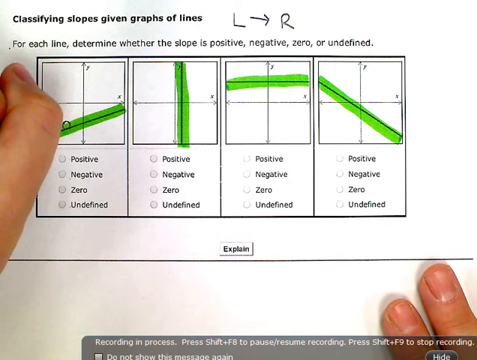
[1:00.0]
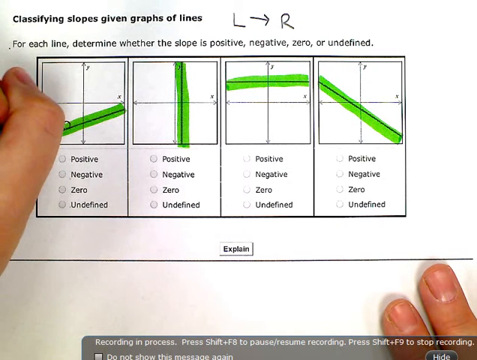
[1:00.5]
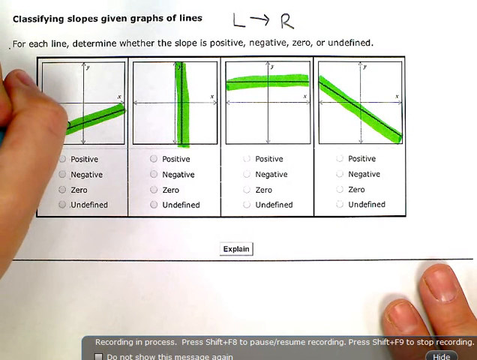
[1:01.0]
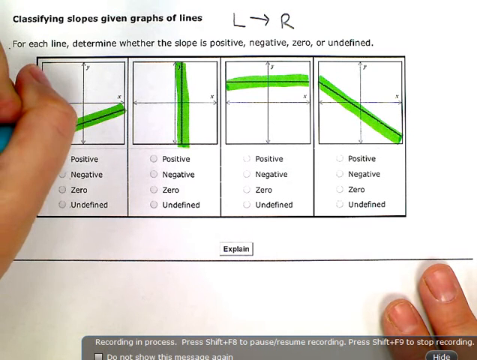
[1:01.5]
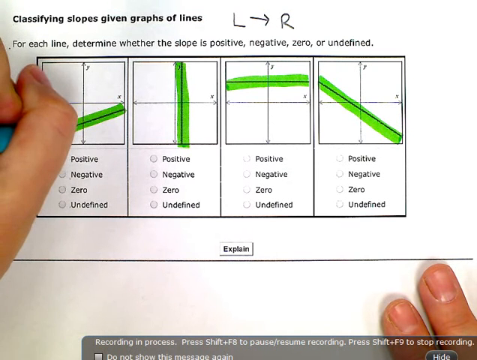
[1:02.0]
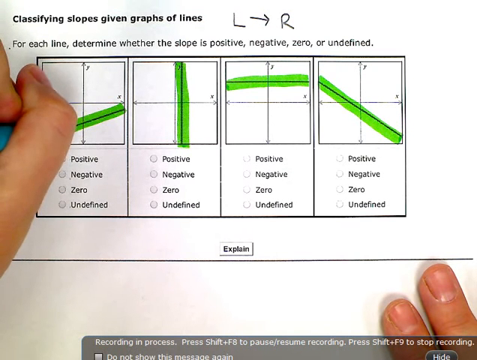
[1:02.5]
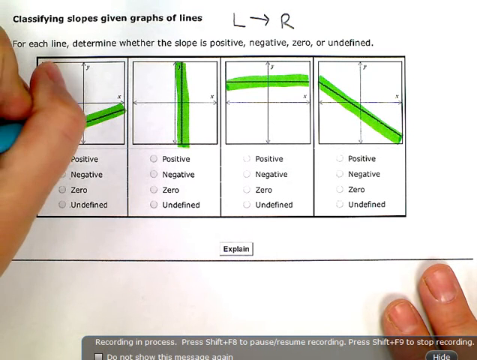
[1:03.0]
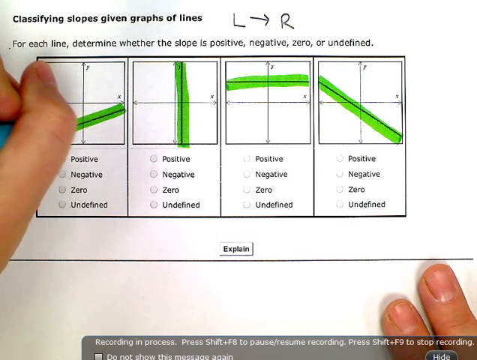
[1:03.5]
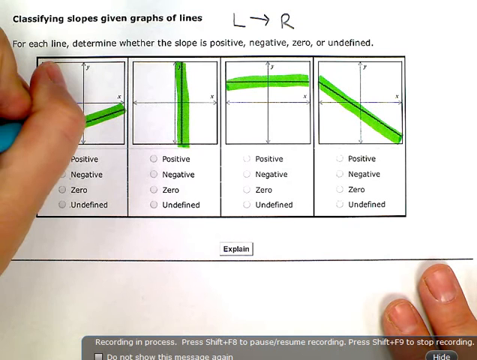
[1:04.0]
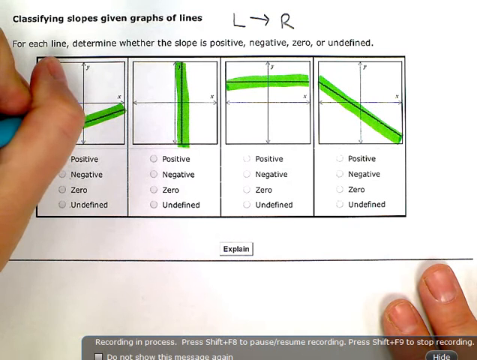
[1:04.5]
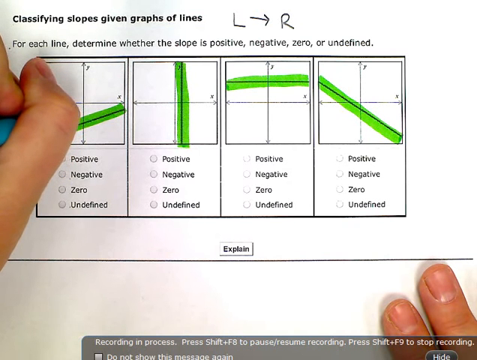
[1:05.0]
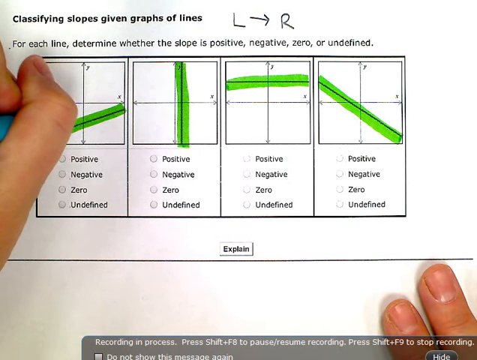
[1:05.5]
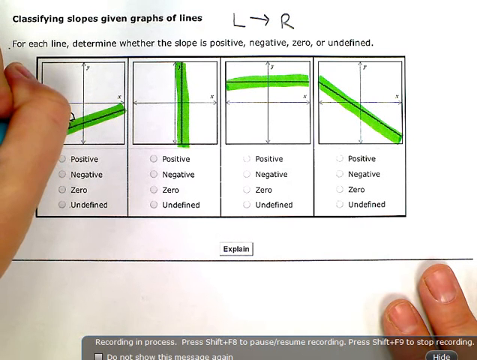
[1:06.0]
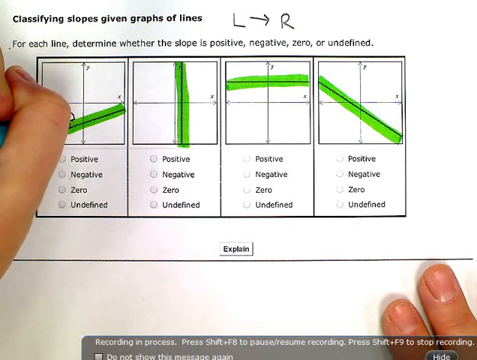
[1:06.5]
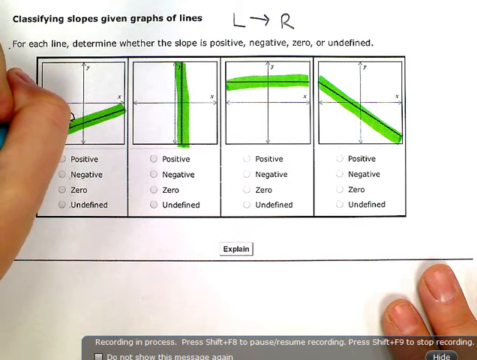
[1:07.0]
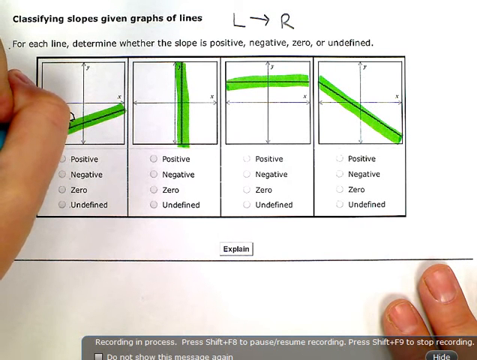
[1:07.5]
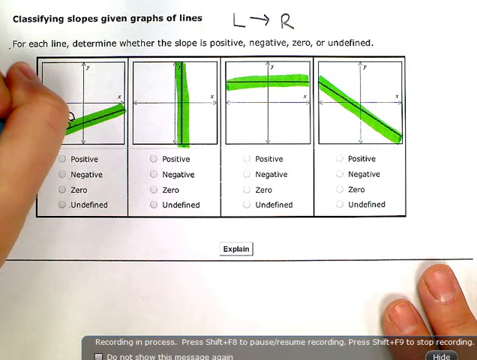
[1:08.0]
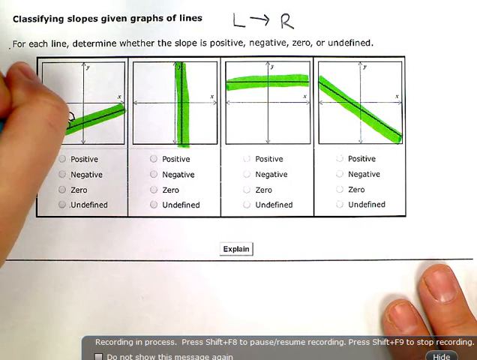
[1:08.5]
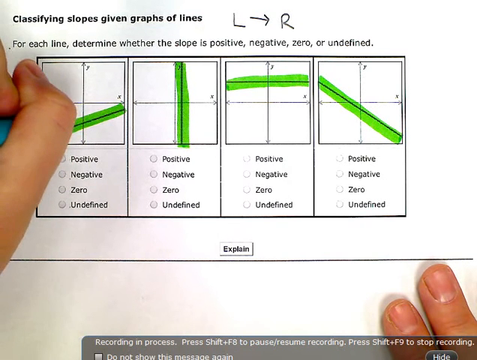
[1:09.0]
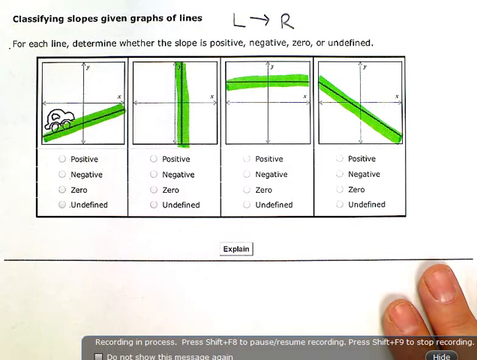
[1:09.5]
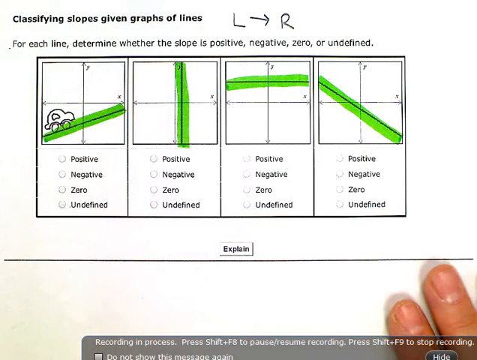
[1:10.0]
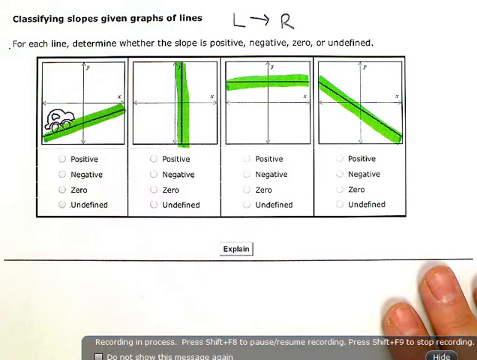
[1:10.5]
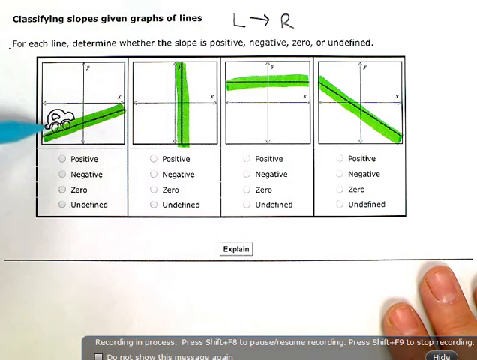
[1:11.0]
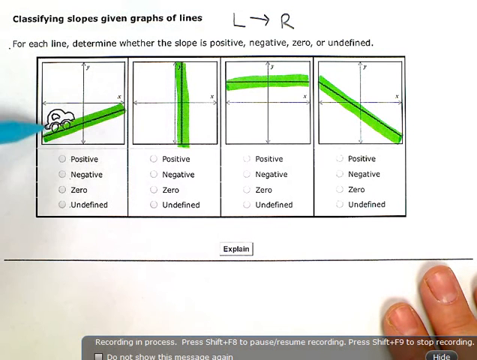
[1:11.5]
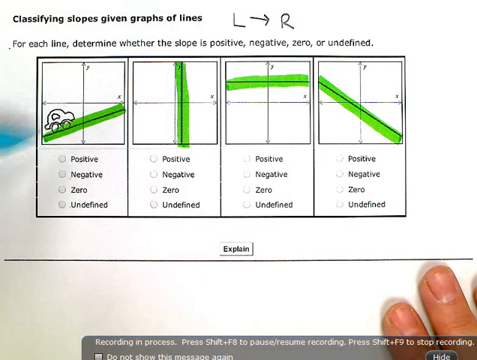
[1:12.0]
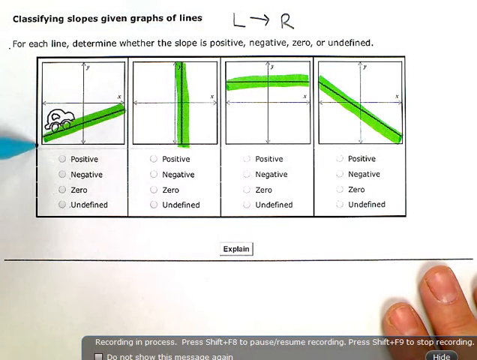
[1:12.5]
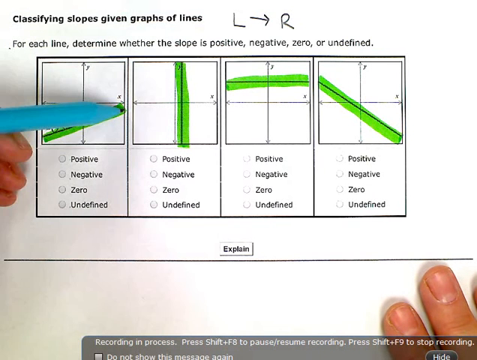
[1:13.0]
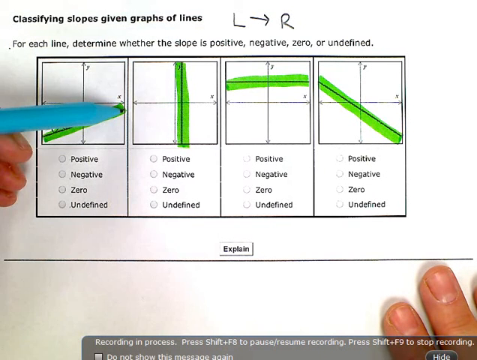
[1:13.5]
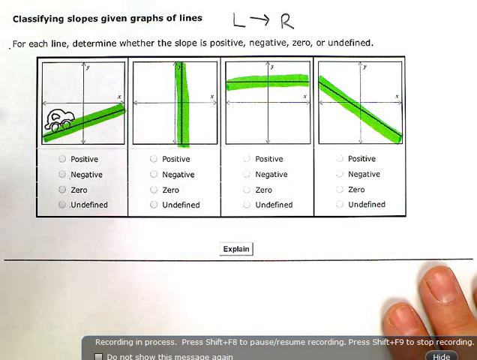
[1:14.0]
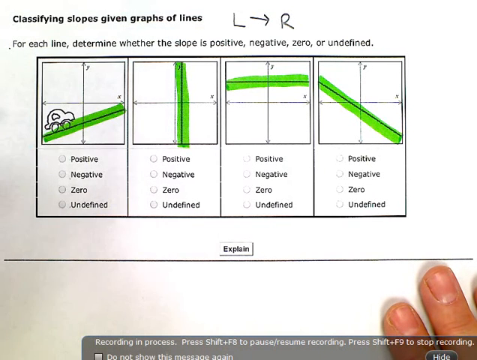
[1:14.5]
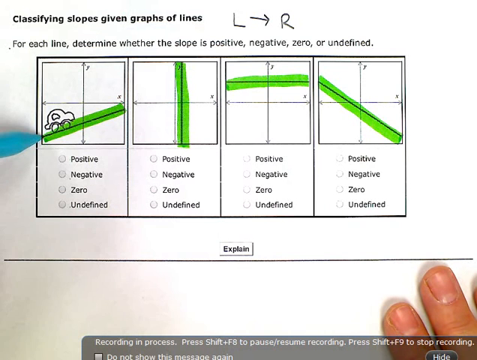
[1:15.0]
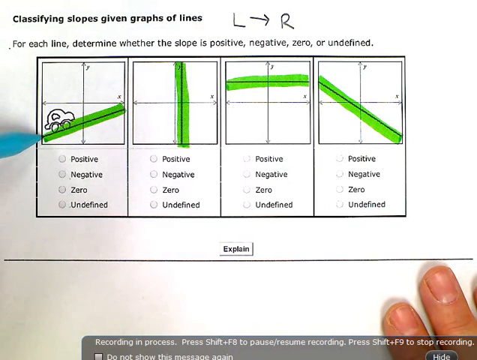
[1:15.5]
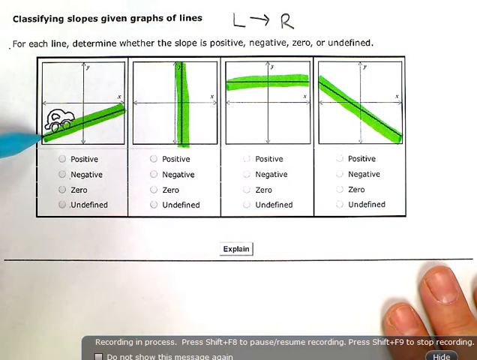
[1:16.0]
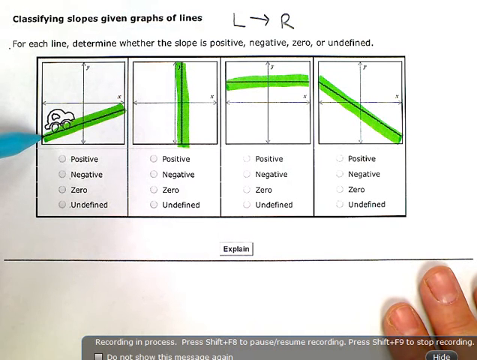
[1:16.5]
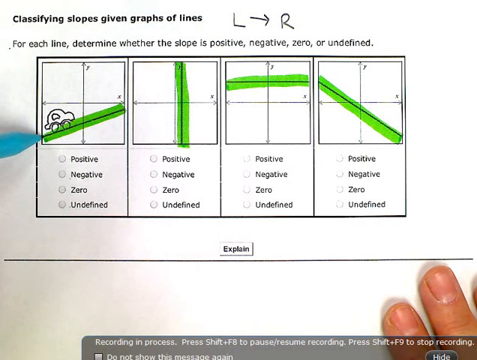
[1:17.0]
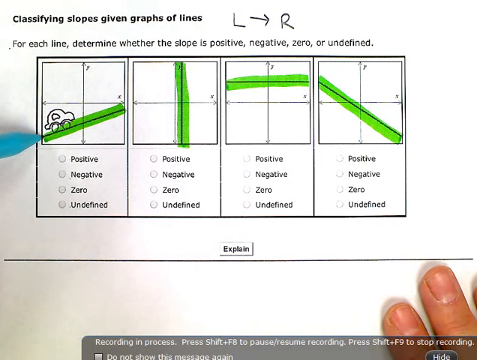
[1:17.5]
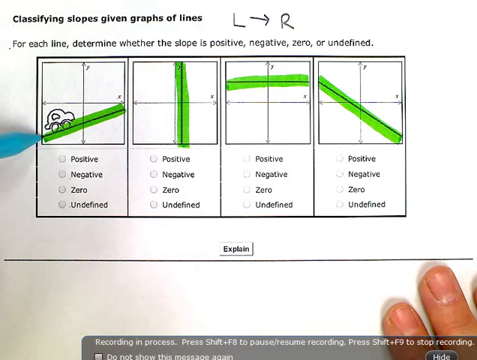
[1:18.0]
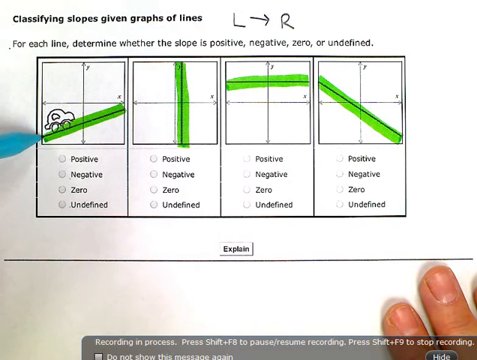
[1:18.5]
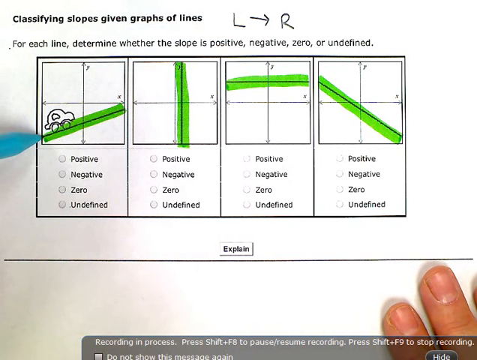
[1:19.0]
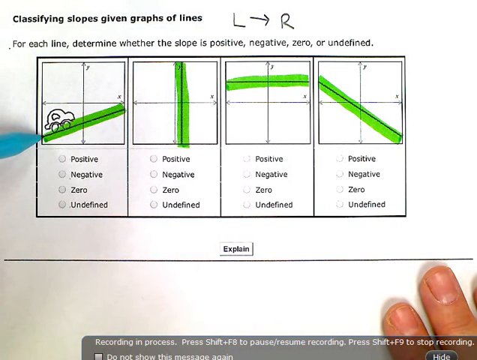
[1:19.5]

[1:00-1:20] The page has the heading "classifying slopes given graphs of line", with the words "for each line determine whether the slope is positive, negative, zero or undefined" below. A rectangular box has four sections, each with a four-gridded square and a line drawn in it, and the lines have been highlighted in green highlighter. A child is working on the problem: the child's right two fingers are visible underneath the page in the bottom right corner, while the child's left hand writes in the first box. The child appears to have drawn a small car on the line in the bottom left square of the first four-gridded box. The page looks to be paper rather than a computer, since the child draws directly onto it.